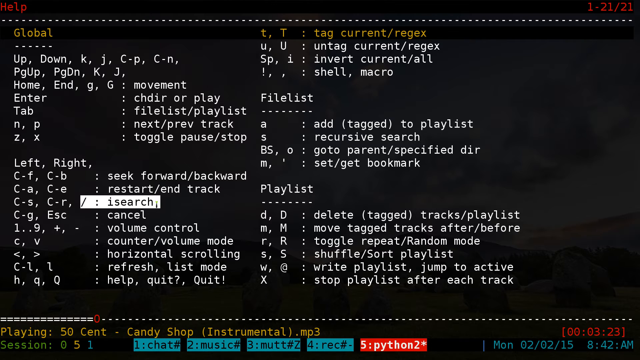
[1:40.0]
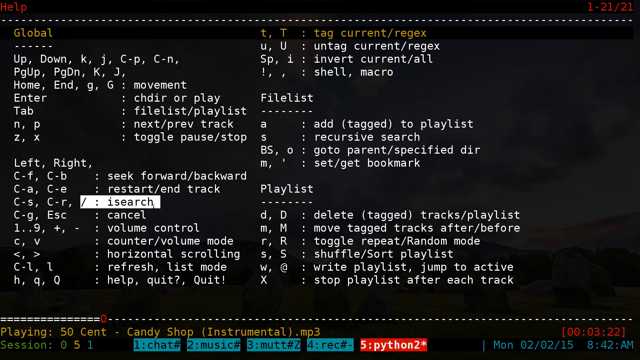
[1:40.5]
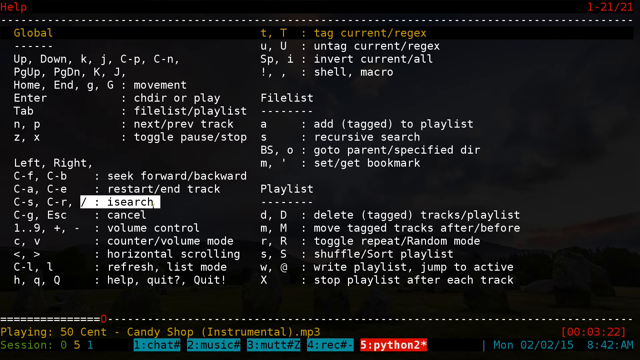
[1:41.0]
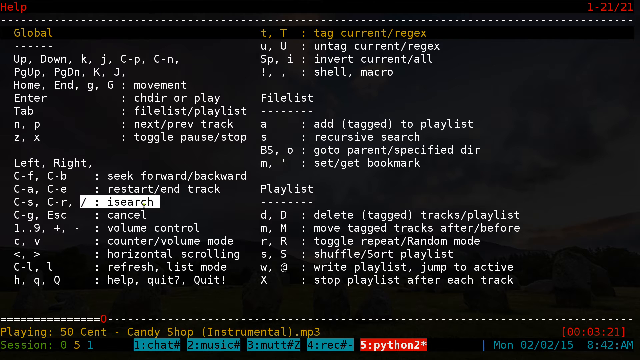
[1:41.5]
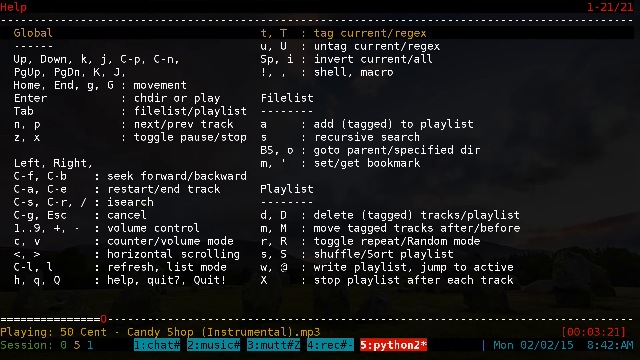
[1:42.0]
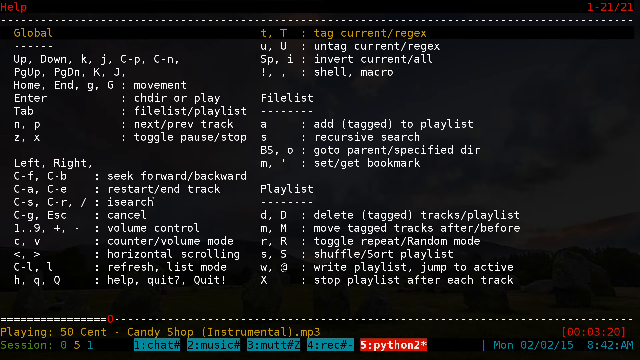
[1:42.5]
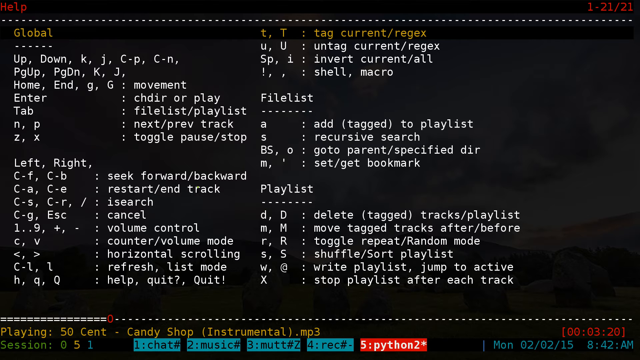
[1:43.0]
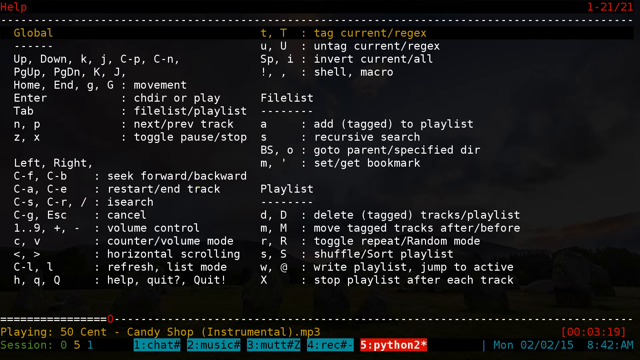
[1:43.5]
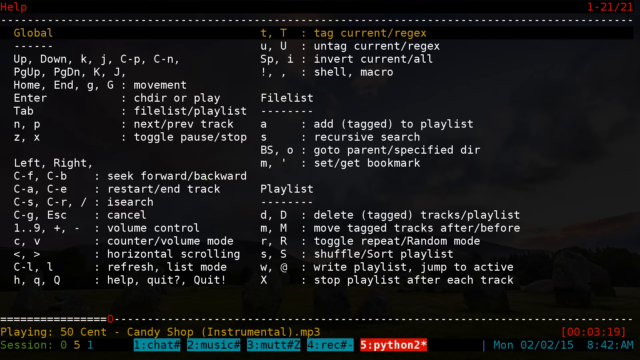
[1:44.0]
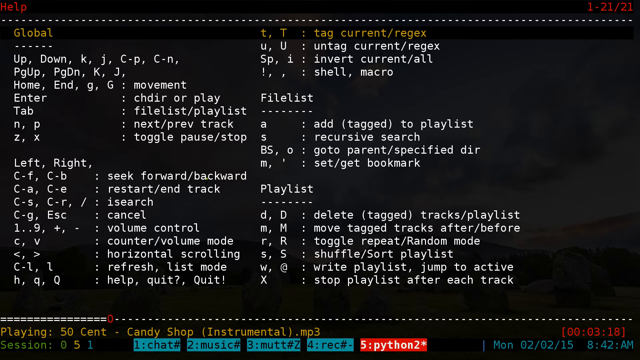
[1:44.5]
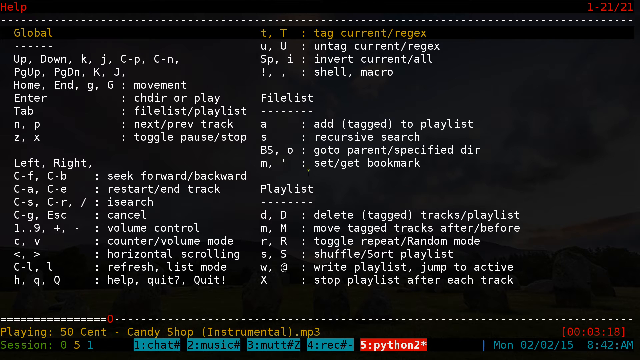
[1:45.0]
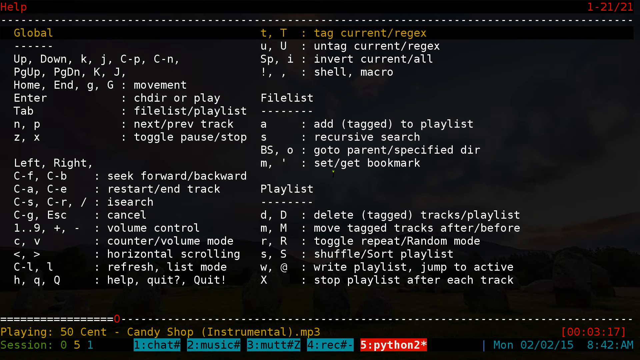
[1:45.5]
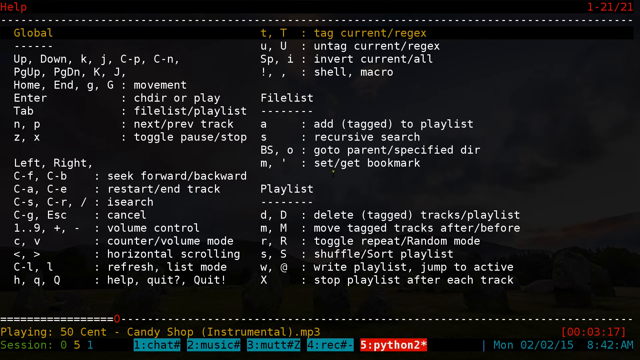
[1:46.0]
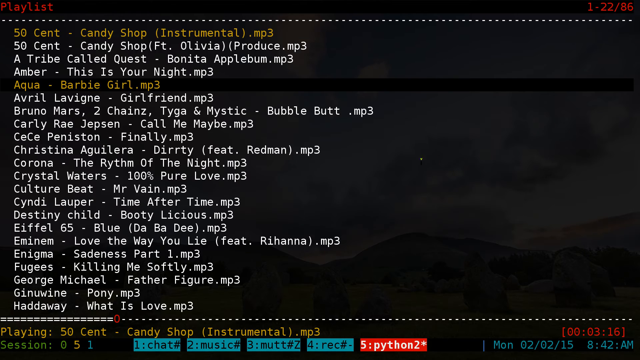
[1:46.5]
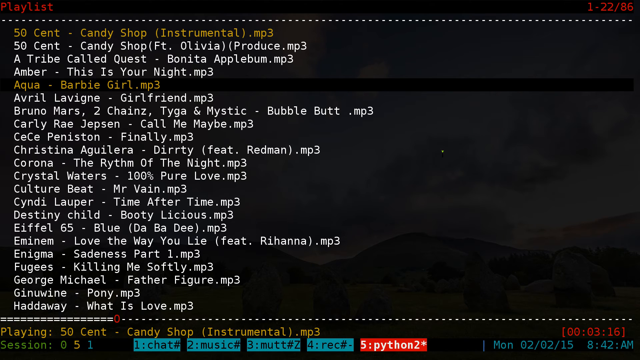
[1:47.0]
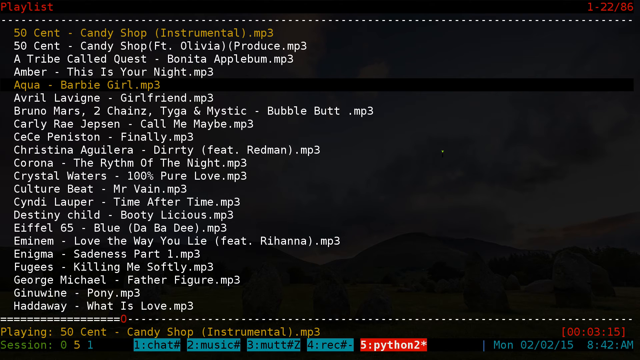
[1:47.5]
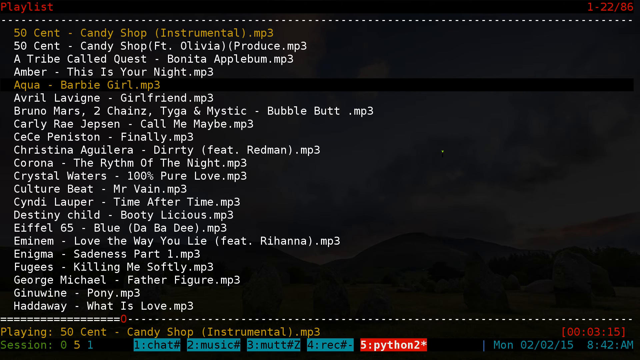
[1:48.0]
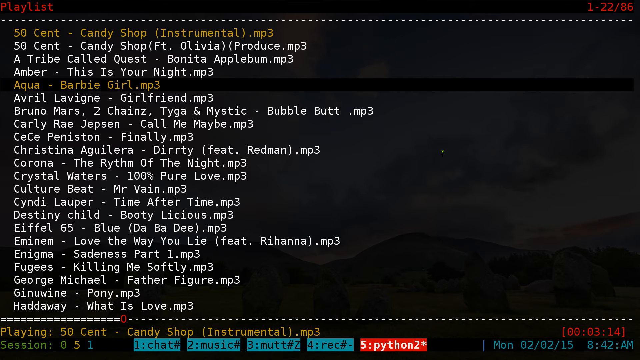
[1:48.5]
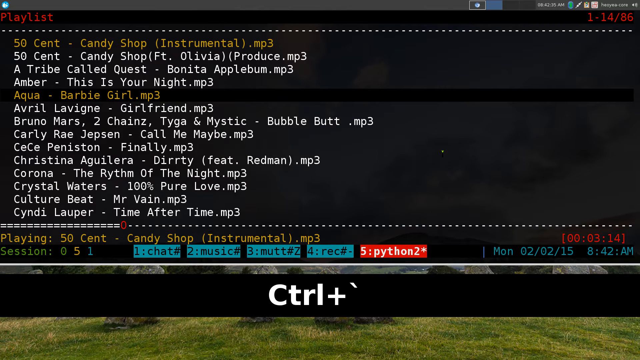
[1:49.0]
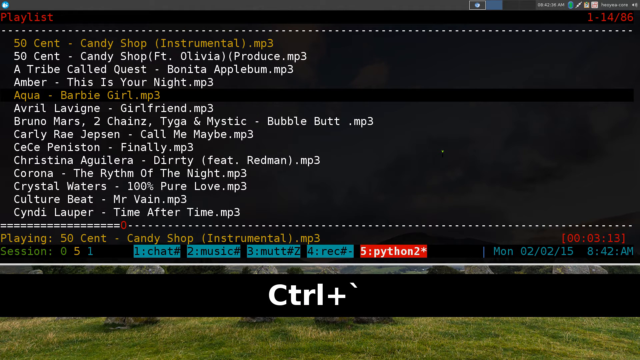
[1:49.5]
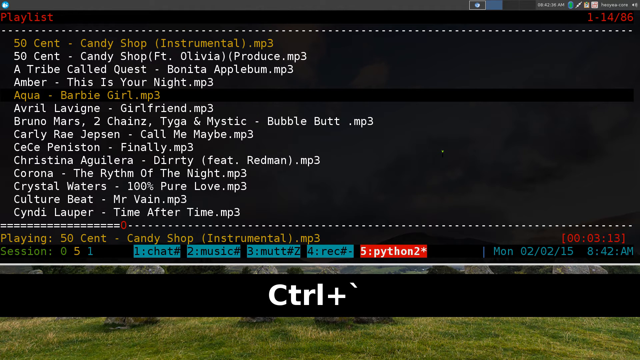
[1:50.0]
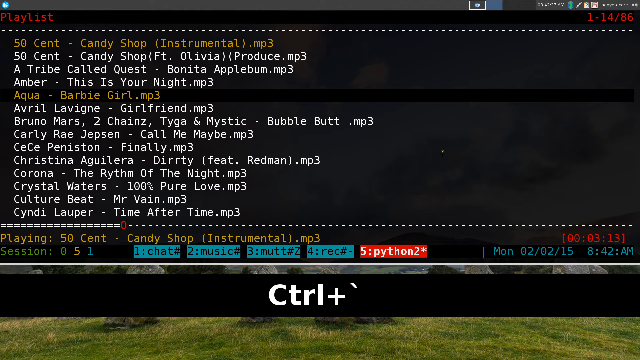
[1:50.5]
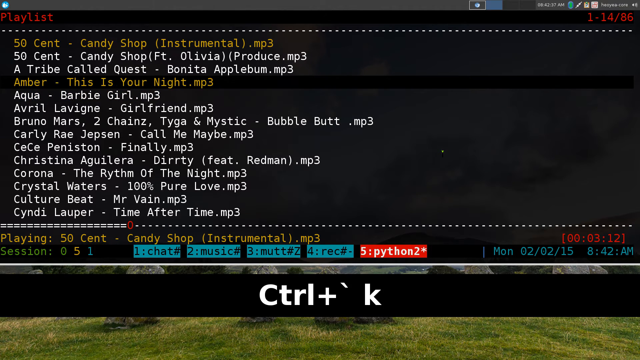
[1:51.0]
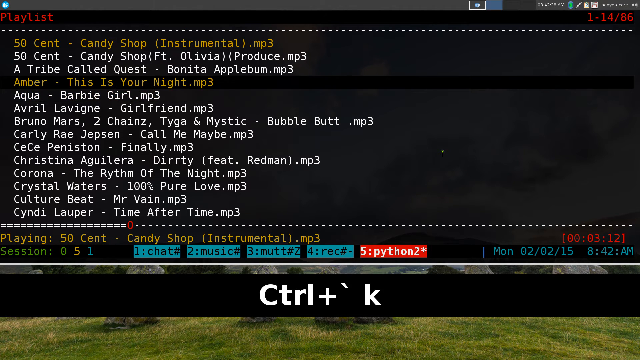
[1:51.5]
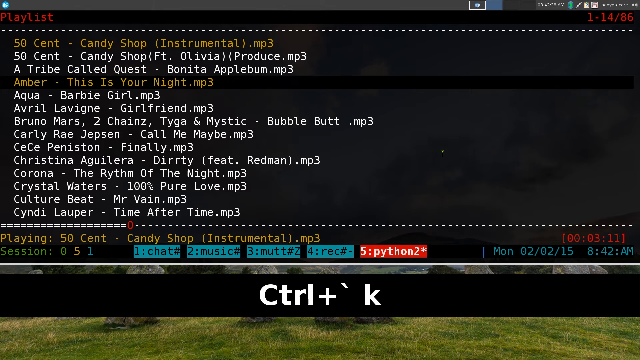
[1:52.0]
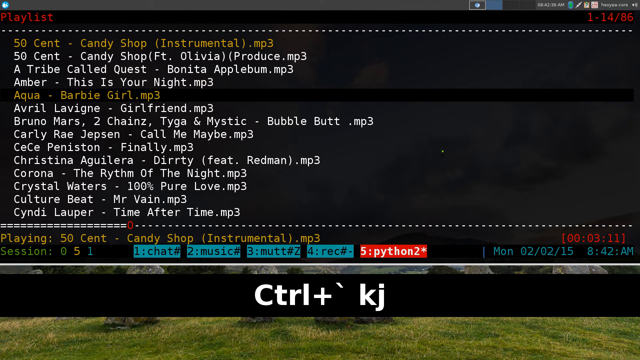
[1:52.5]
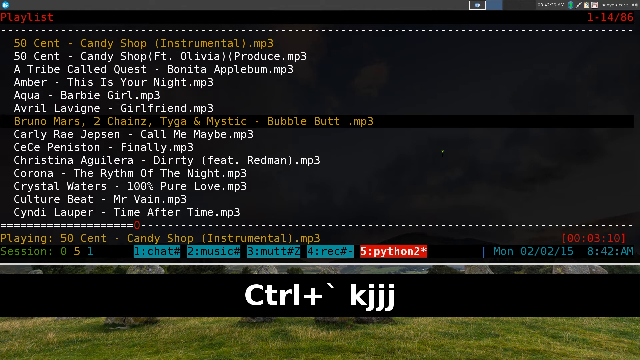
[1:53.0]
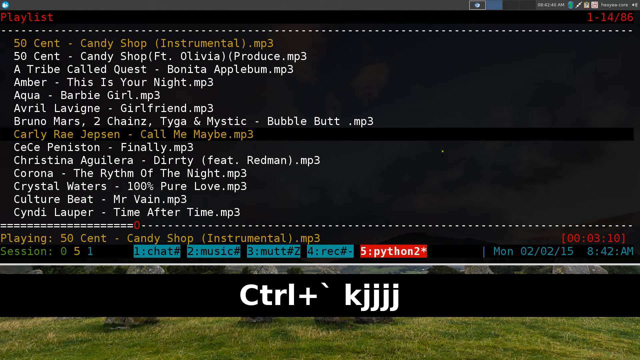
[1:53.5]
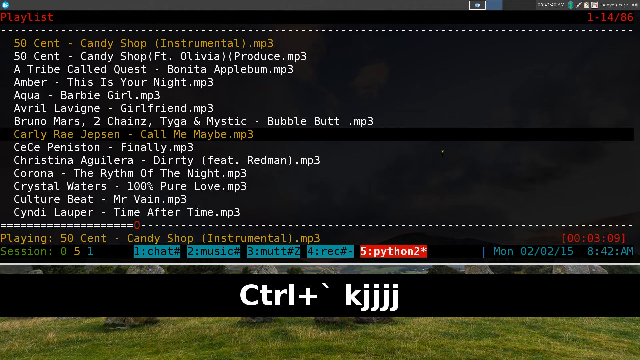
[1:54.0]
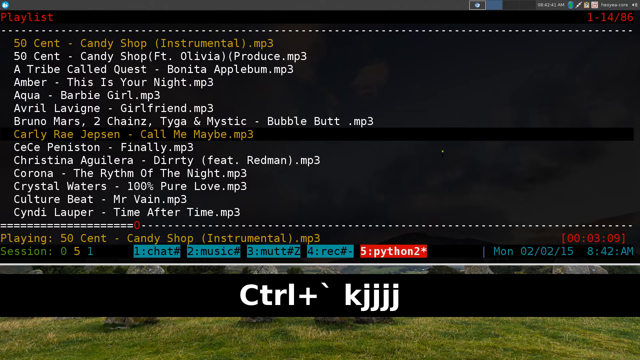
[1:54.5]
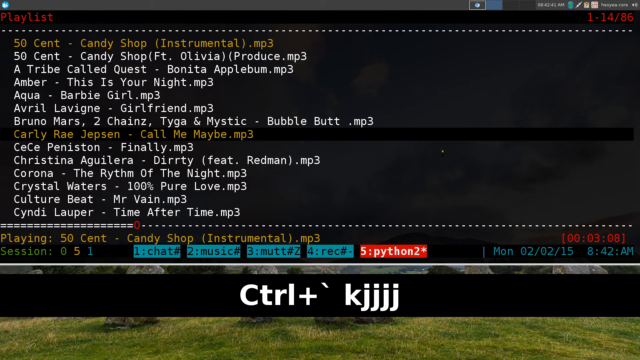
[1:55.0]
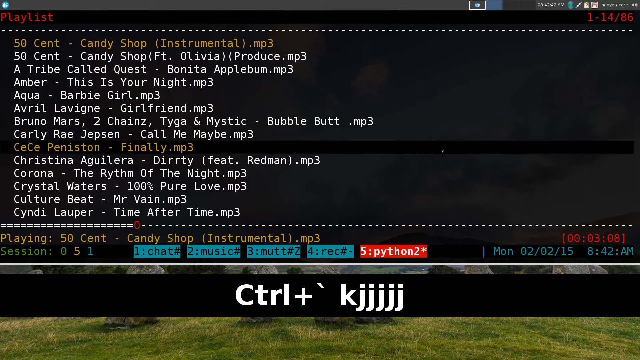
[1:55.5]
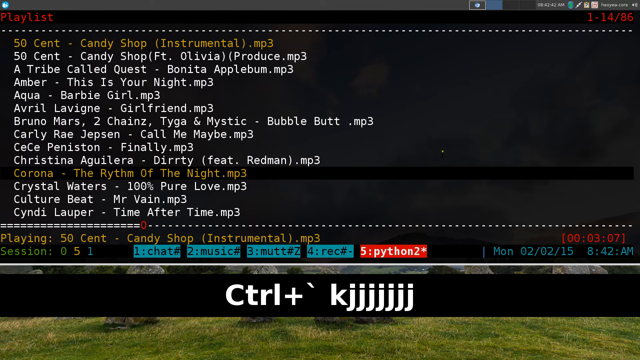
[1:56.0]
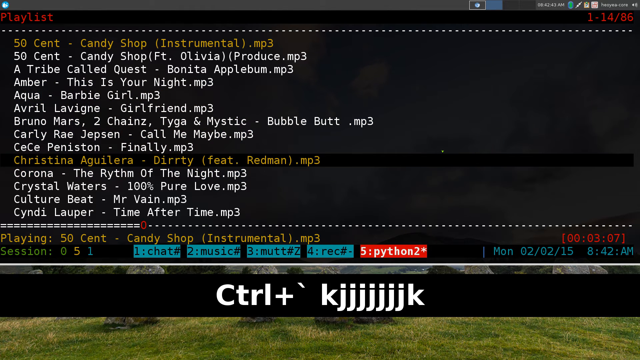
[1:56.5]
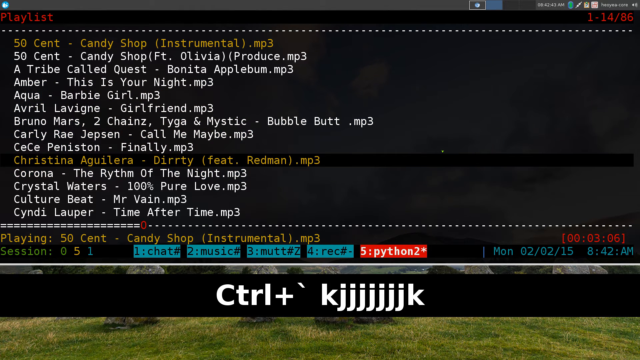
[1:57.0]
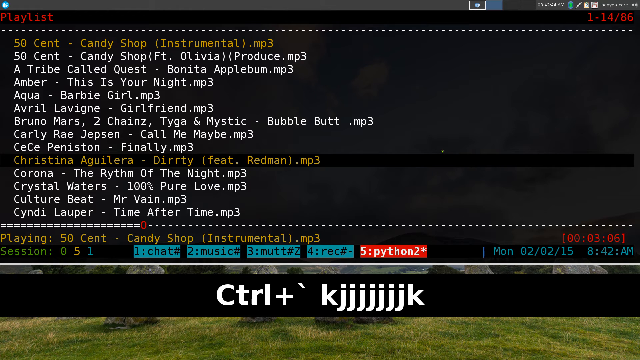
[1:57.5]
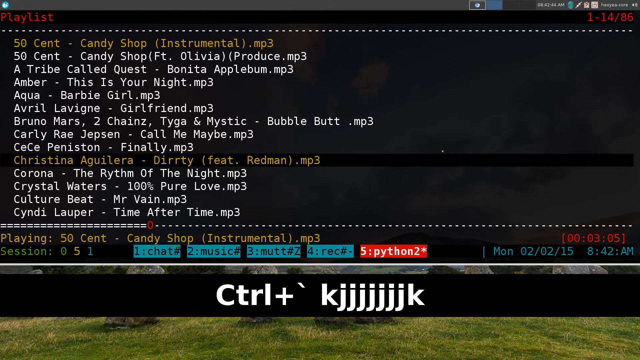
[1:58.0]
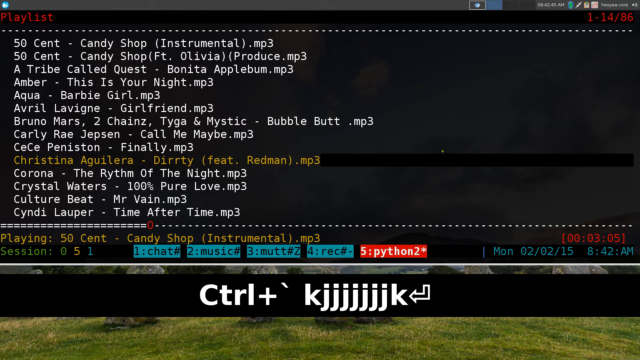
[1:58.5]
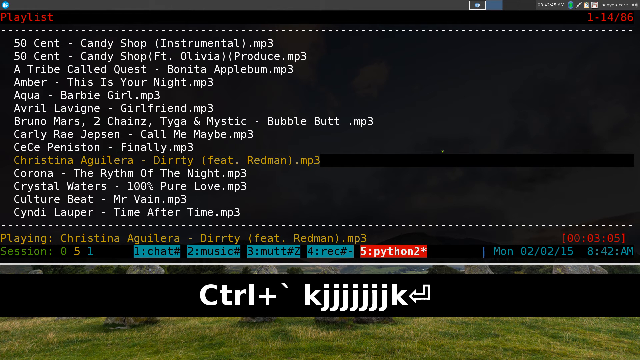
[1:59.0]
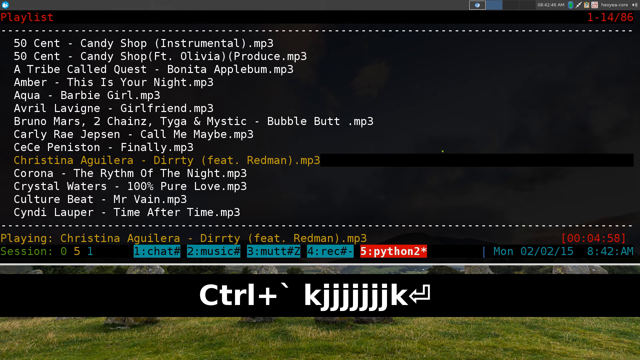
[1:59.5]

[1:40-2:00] The user highlights the isearch commands, then moves the mouse over to the filelist section and hovers over it before backing out of the help section to the playlist. It shows the first 22 songs out of a total of 86, with the 50 cent candy shop instrumental having played for about a minute and about 3 minutes and 14 seconds remaining. The user presses control+apostrophe while hovering over the Aqua Barbie Girl.mp3 song, presses the K key once to move the list up, the J key seven times to move the list down, and the K key once to move back up, then presses enter. This starts playing Christina Aguilera Dirty Featuring Redmond.mp3, replacing the 50 cent song.